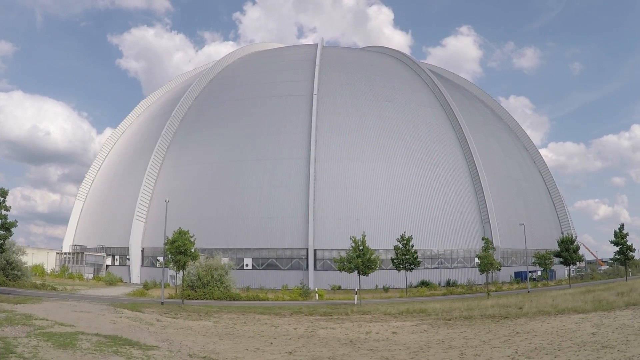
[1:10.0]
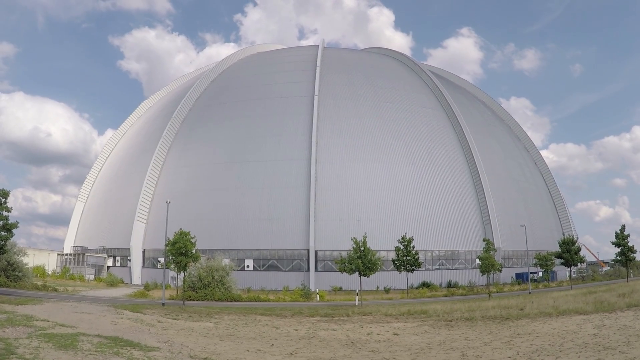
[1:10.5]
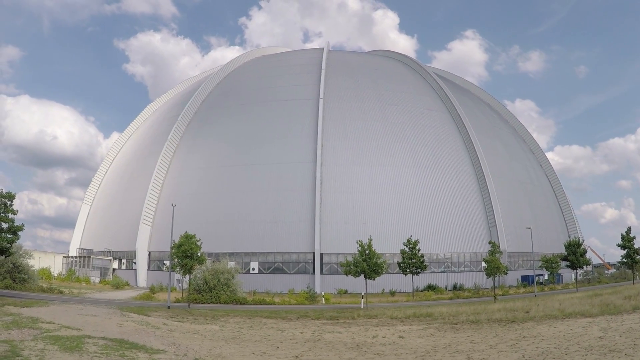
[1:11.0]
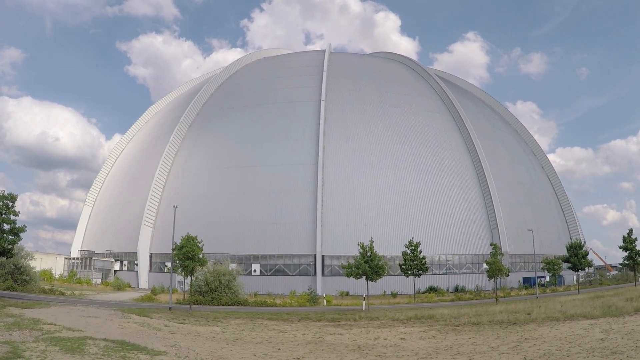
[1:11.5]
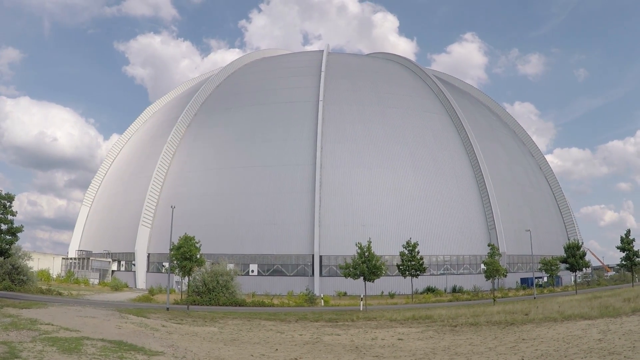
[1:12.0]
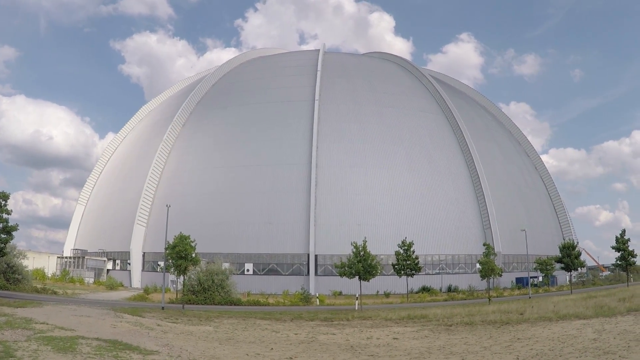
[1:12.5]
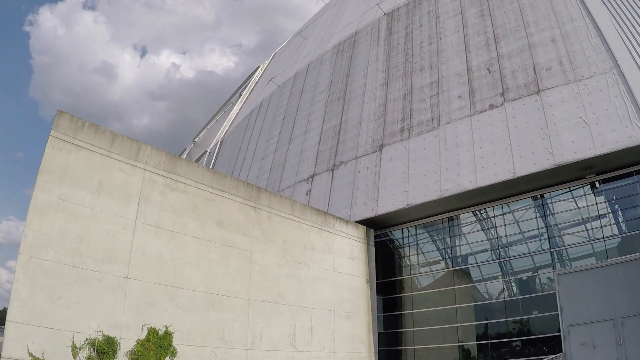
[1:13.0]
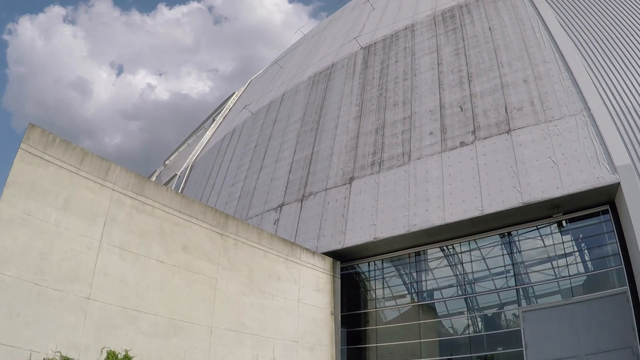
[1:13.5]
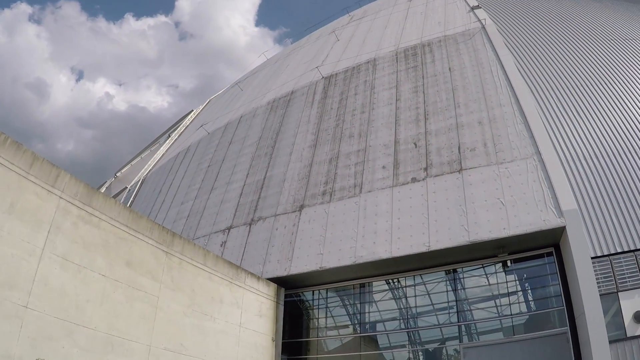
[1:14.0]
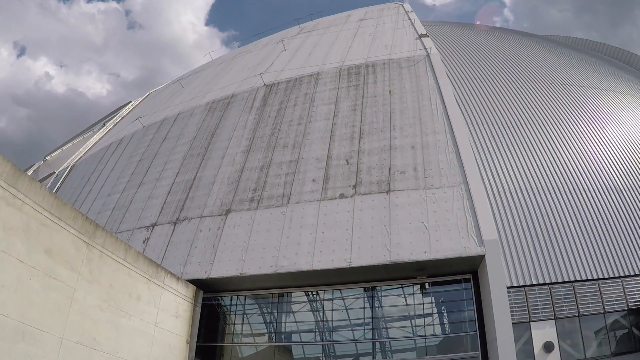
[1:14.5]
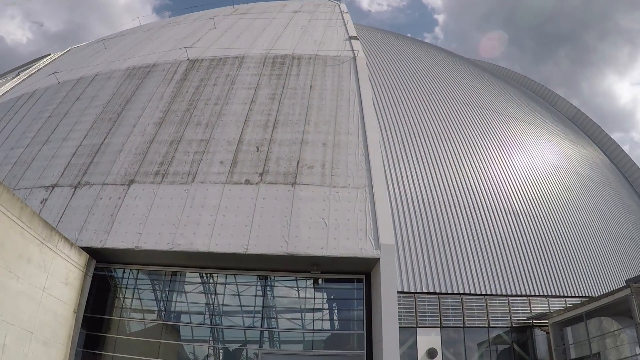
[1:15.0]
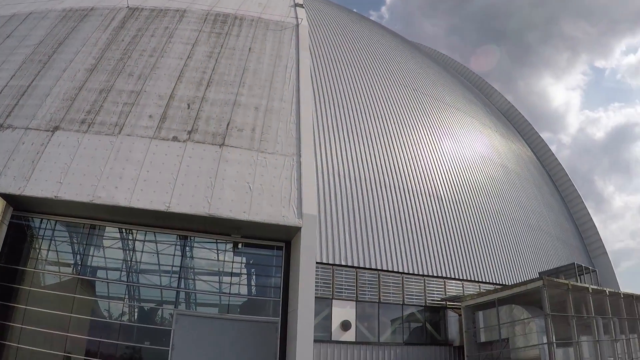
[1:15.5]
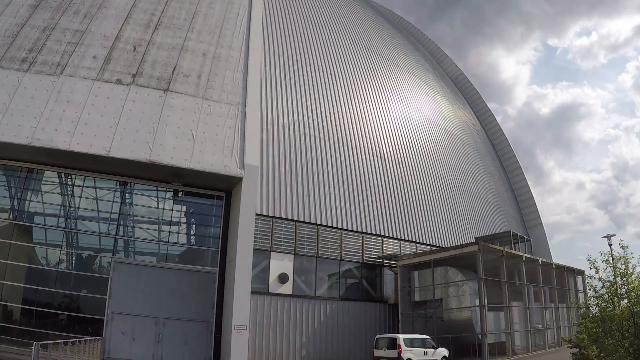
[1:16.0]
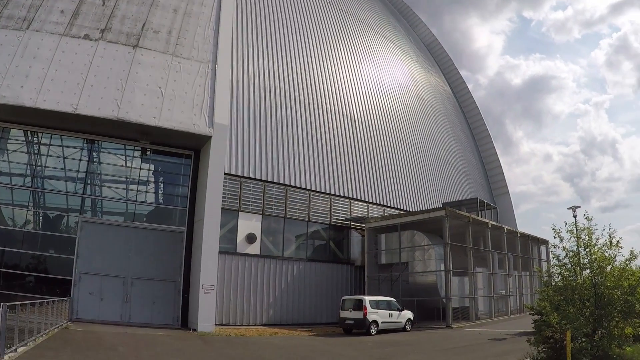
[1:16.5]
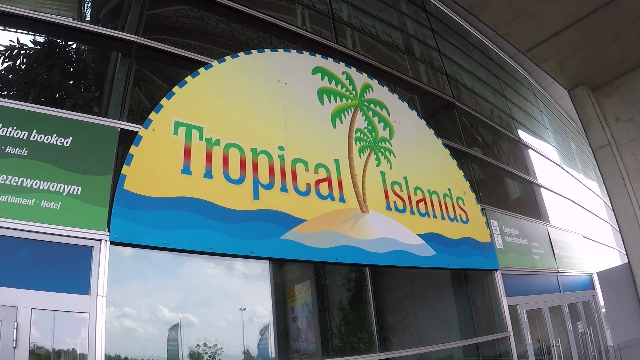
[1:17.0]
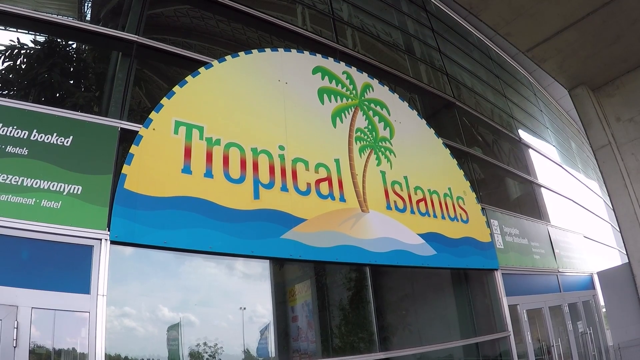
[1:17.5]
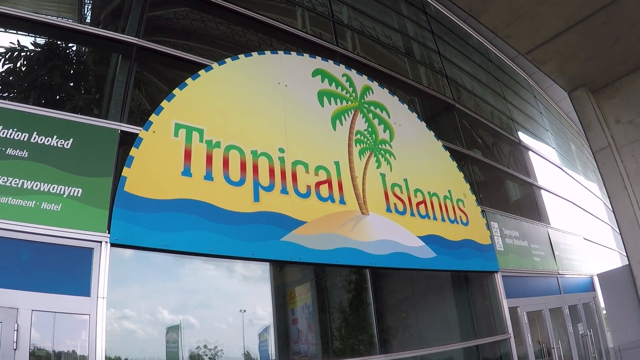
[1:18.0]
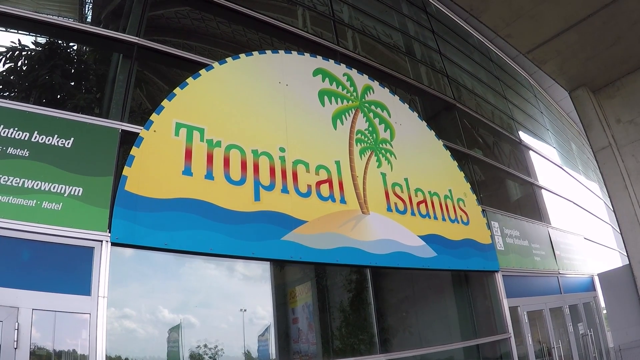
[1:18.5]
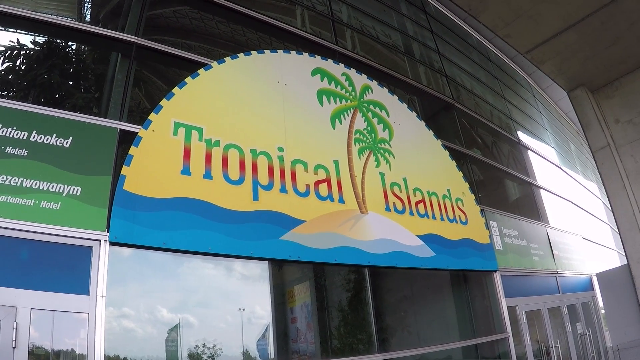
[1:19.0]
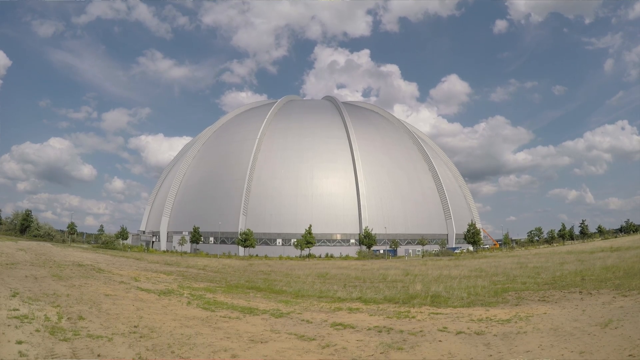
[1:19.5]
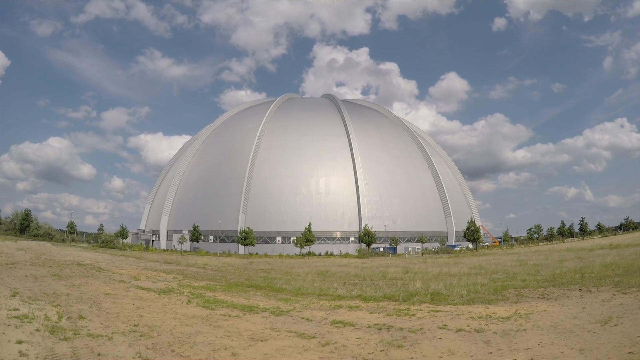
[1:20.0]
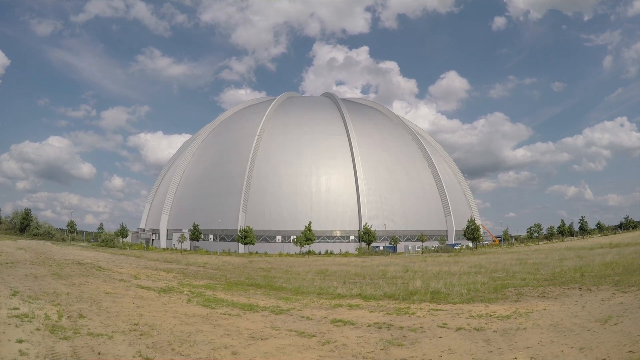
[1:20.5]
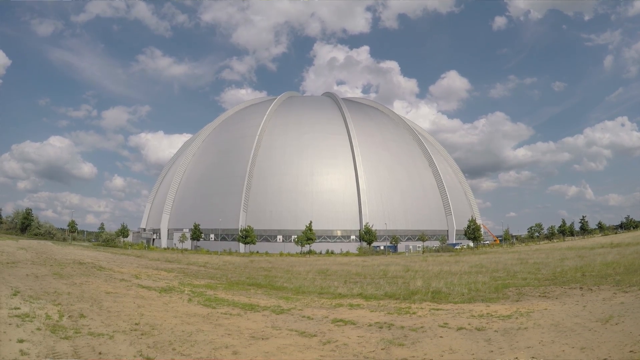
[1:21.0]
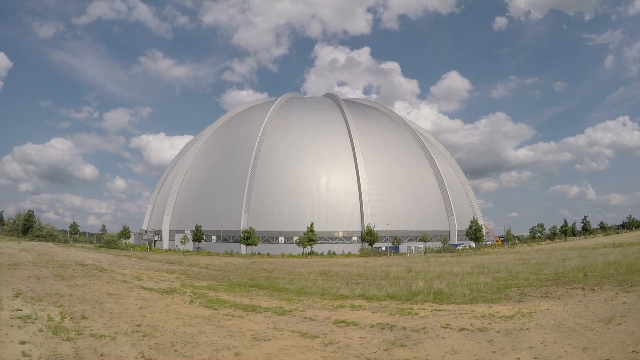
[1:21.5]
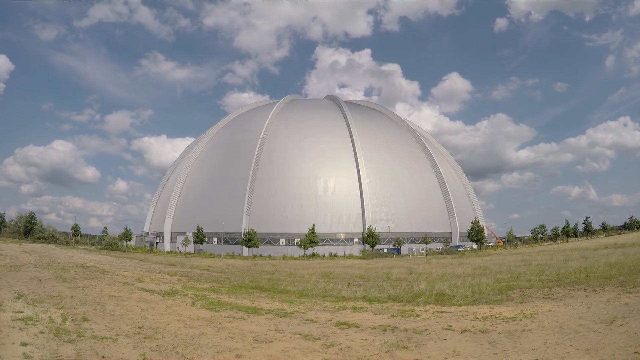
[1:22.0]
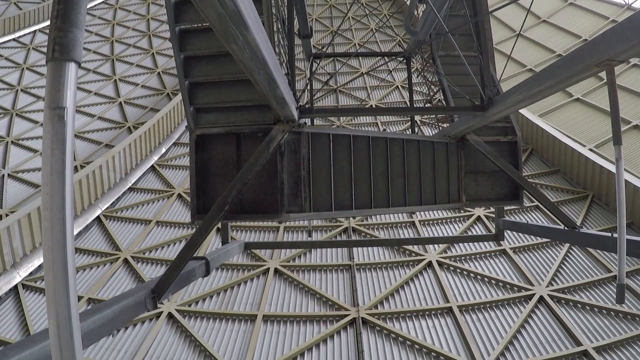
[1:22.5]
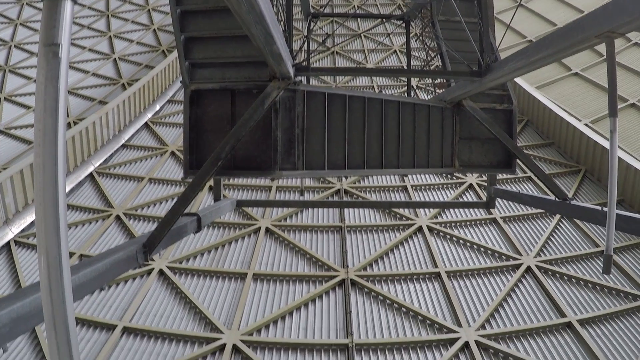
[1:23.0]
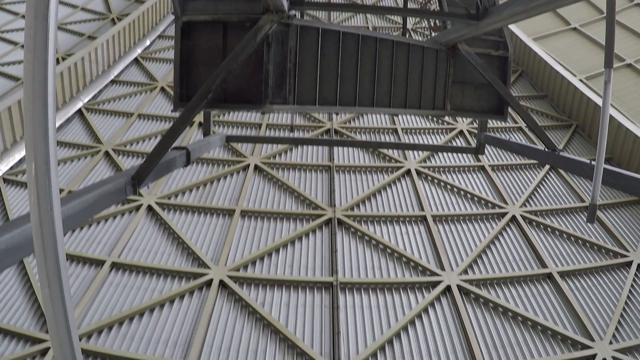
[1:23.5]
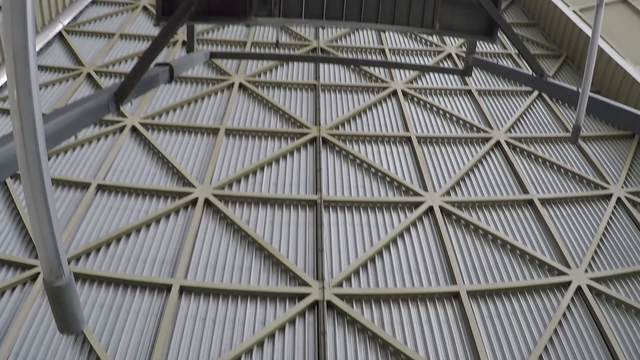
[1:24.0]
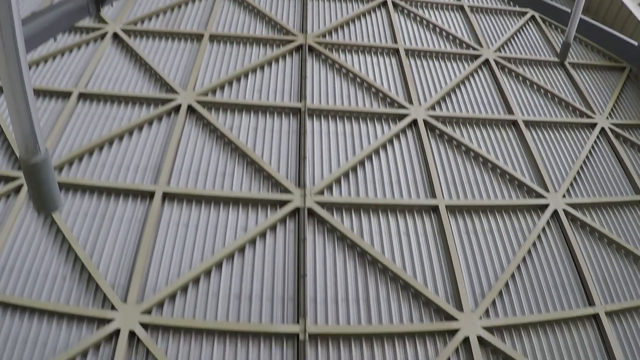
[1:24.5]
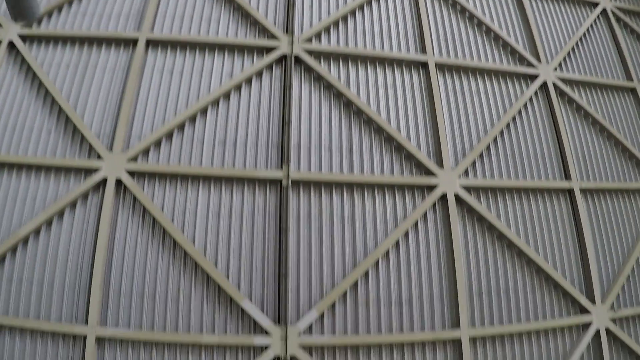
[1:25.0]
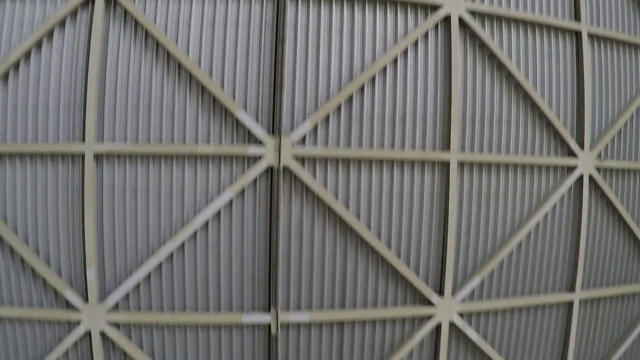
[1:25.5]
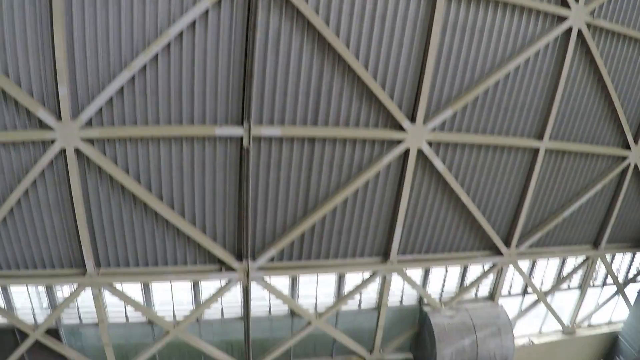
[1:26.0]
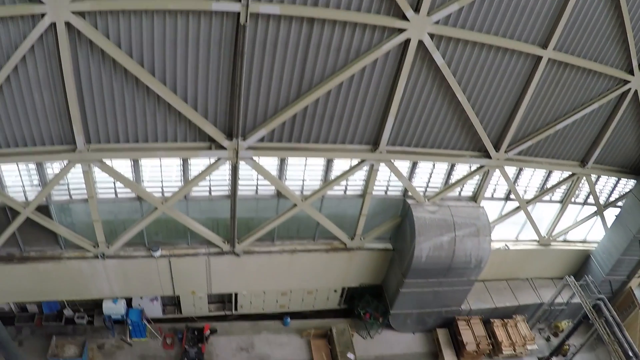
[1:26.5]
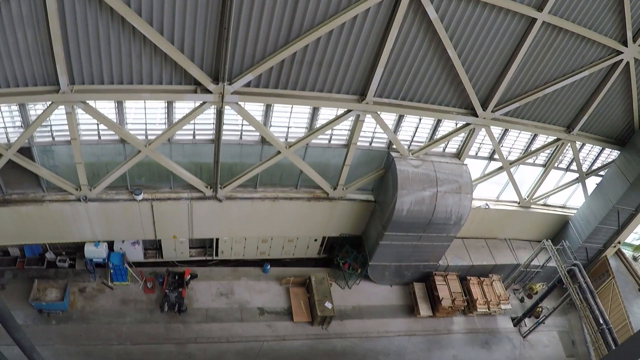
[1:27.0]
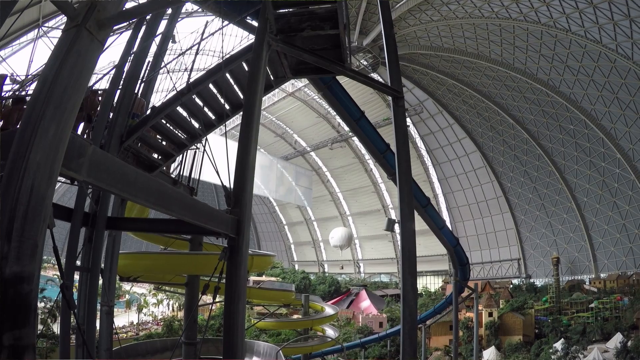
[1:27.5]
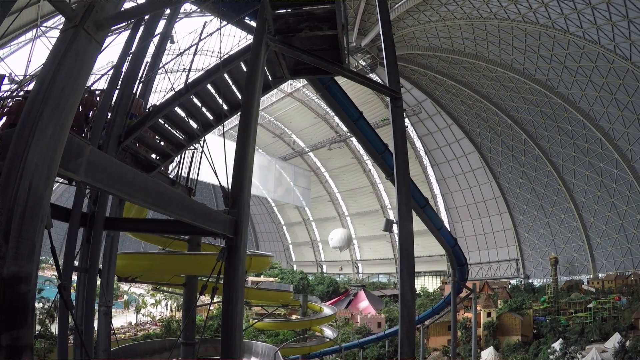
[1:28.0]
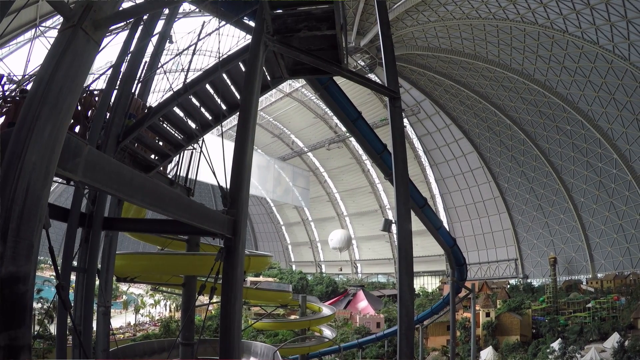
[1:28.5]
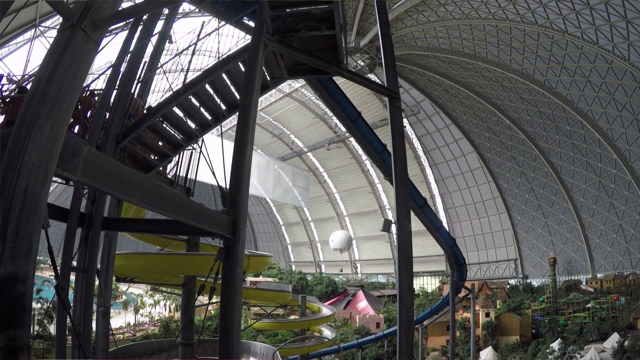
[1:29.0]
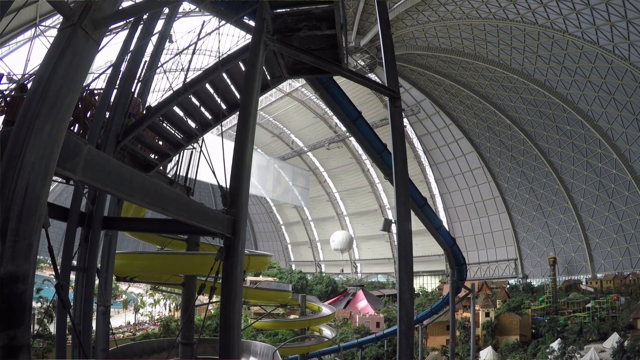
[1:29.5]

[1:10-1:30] The outside of the huge dome is white and rounded at the top, with a row of windows around the bottom, a few feet from the bottom. Green trees surround the dome, a roadway is visible in front of it, and behind it is a huge light blue sky with many white fluffy clouds. The camera pans up to show the sides of the dome and the windows at the bottom, with the sky and trees in the background. A half-circle sign on the side of the dome shows a yellow sky, blue water and a little island in the center with palm trees, with writing that says "tropical islands" in green, red and blue letters. Next to it is a green sign with some white wording. The dome is then seen from a distance again, out in a field, with the field in front of it and five trees spaced around this side of the dome.